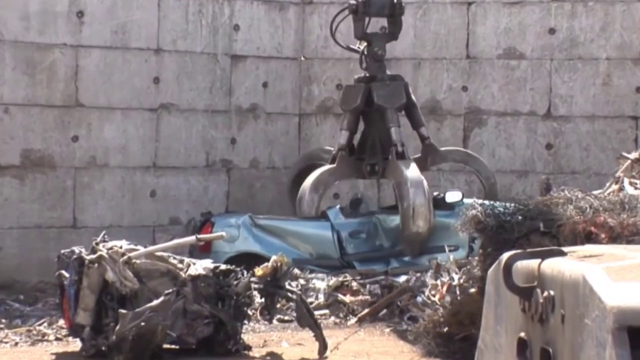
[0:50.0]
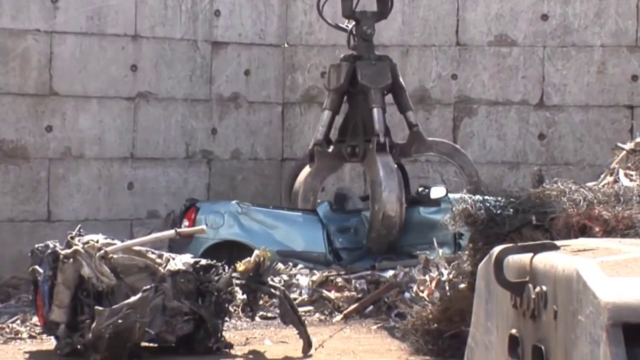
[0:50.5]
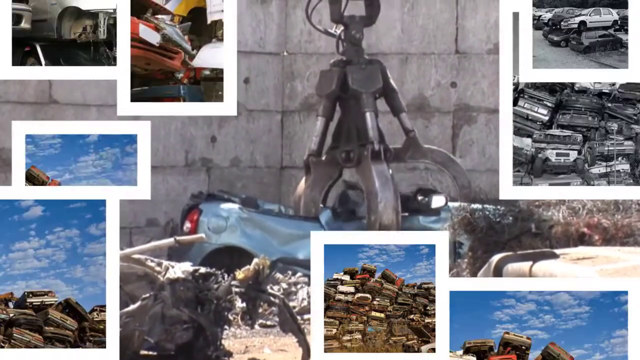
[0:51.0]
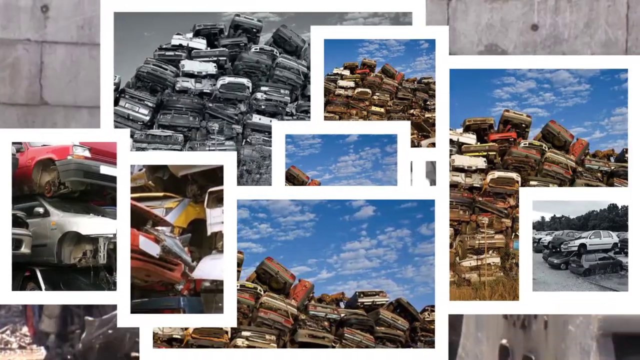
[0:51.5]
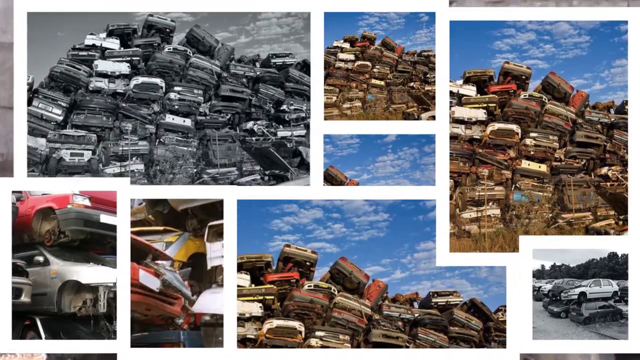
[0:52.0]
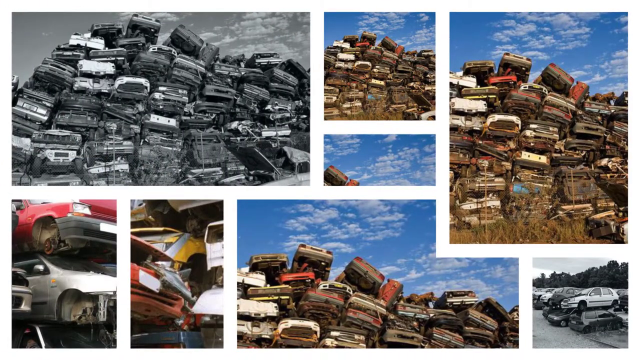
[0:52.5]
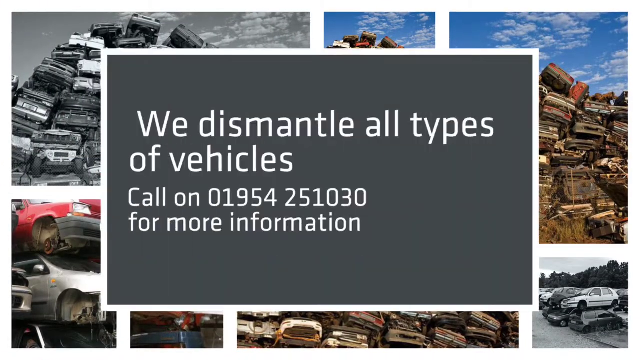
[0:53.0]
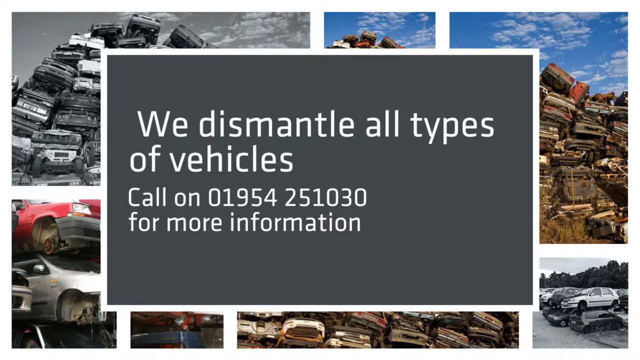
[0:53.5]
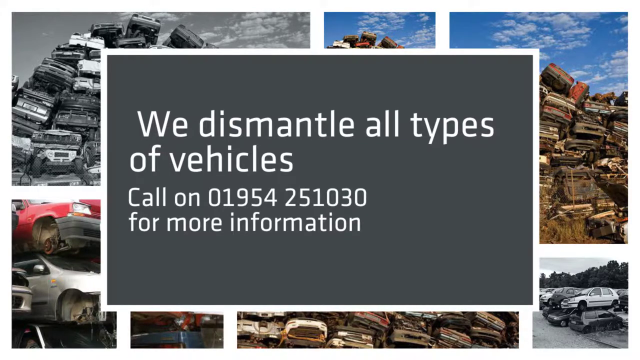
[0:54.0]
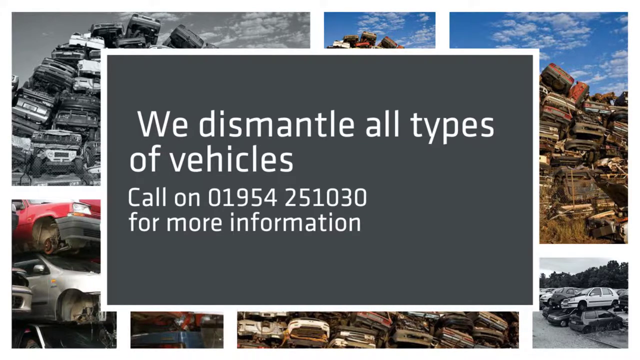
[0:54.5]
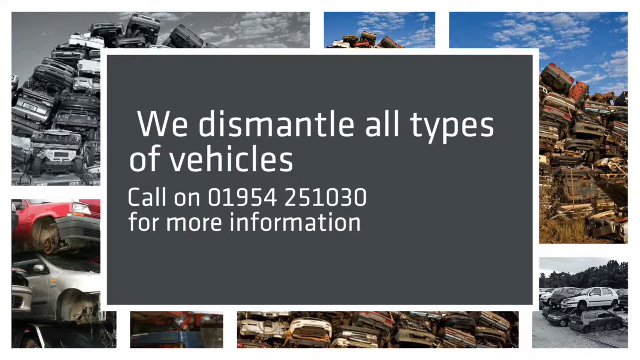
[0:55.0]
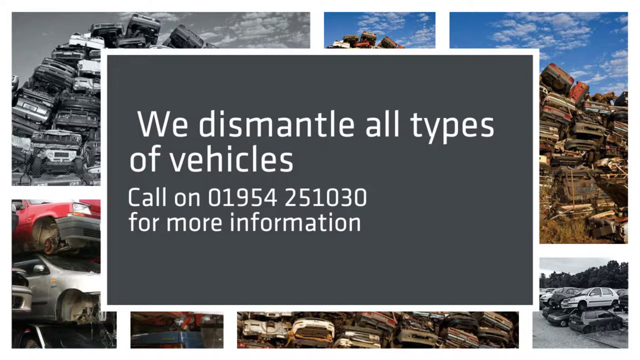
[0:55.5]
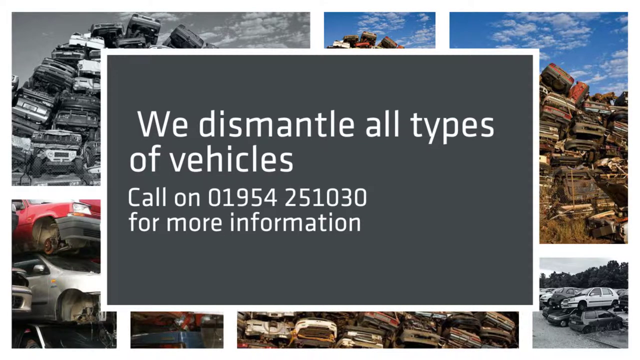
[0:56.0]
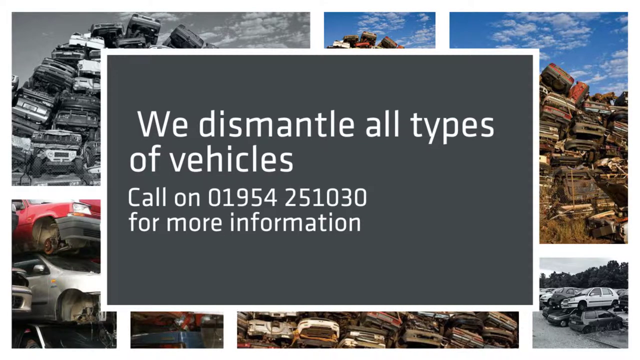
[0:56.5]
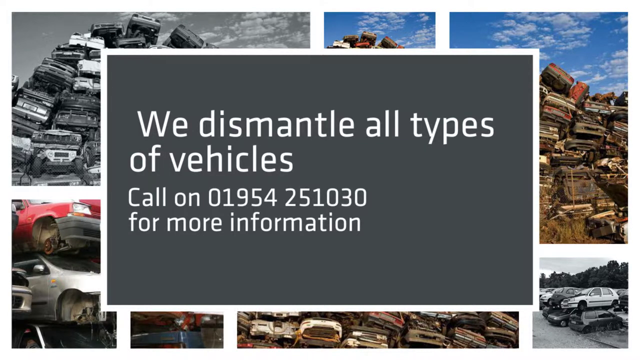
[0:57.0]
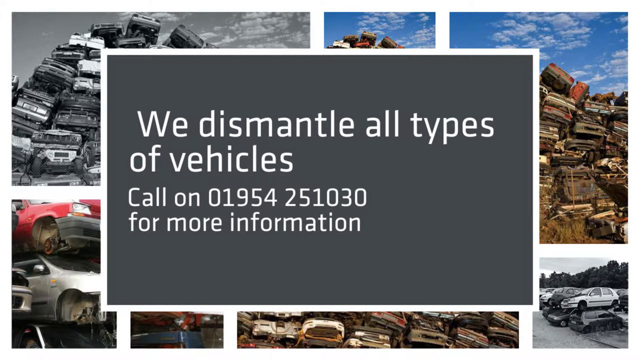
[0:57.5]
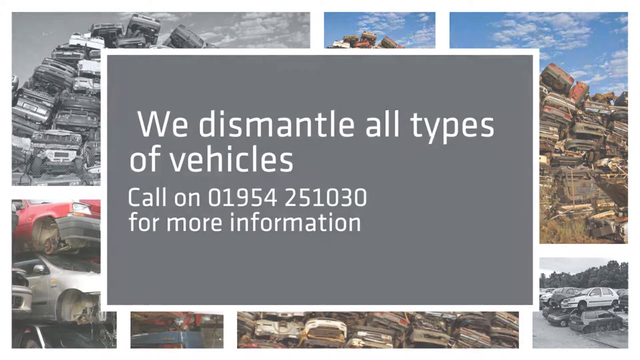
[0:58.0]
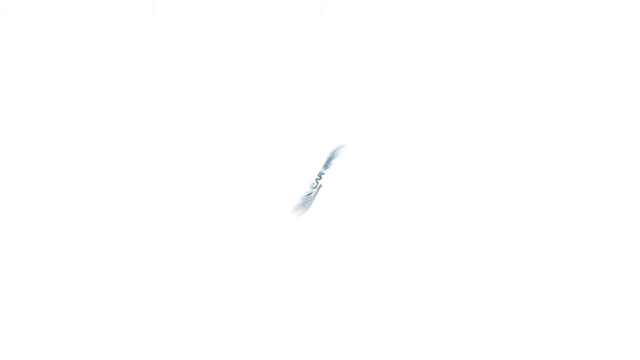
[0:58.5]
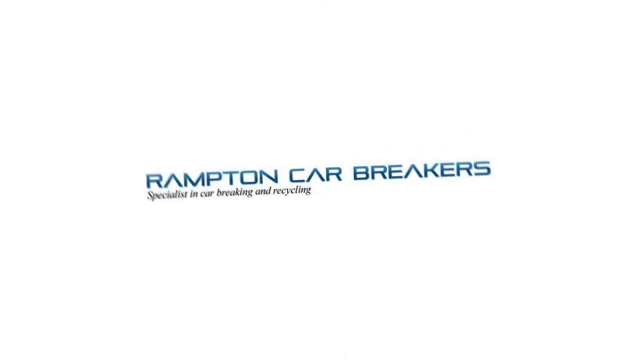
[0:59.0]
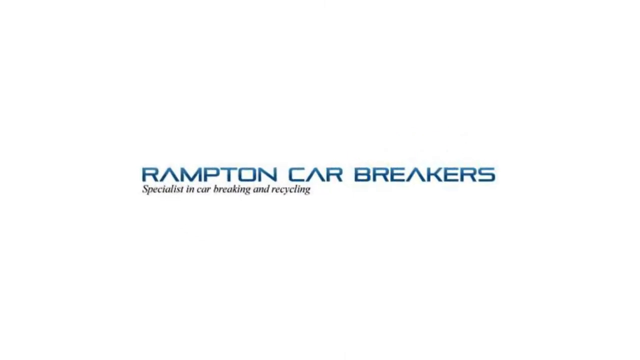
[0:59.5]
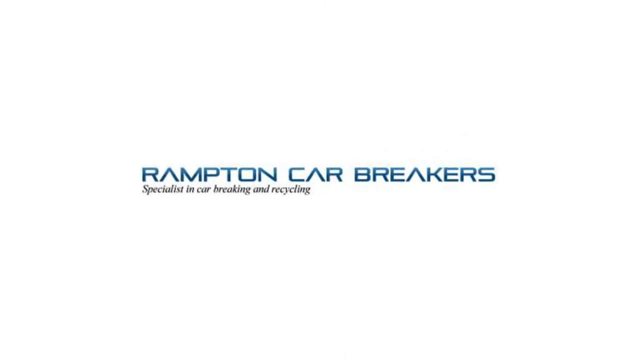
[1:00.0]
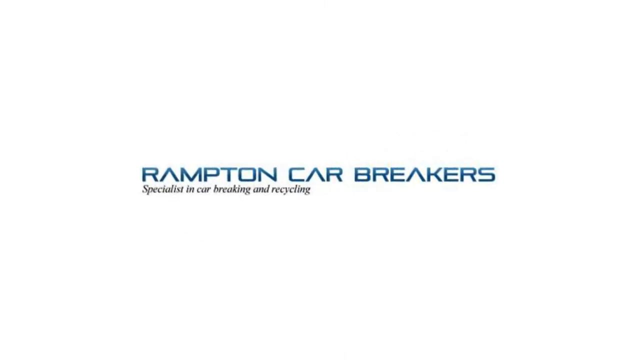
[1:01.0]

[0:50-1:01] A crane picks up an old blue vehicle, followed by multiple pictures, some in black and white and some in color, showing piles and piles of cars and car parts. A sign comes up that says "we dismantle all types of vehicles," with smaller print reading "call on 01954 251030 for more information"; the sign has a gray background with all-white print. The video closes with "Rampton Car Breakers specialist in car breaking and recycling."